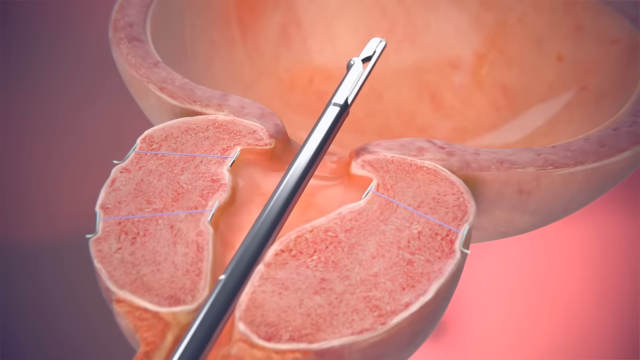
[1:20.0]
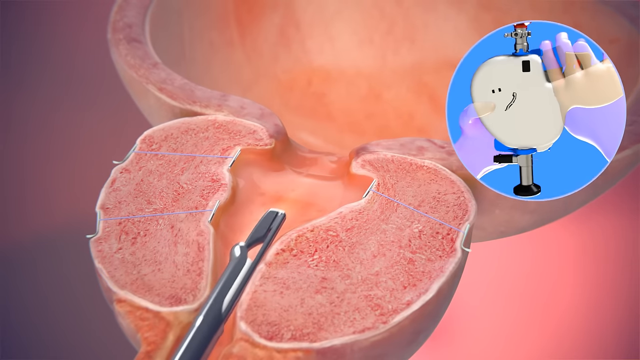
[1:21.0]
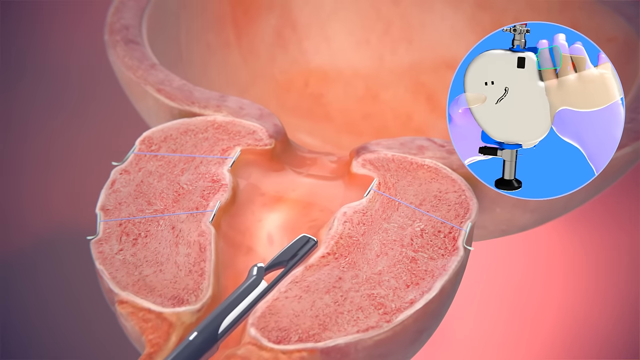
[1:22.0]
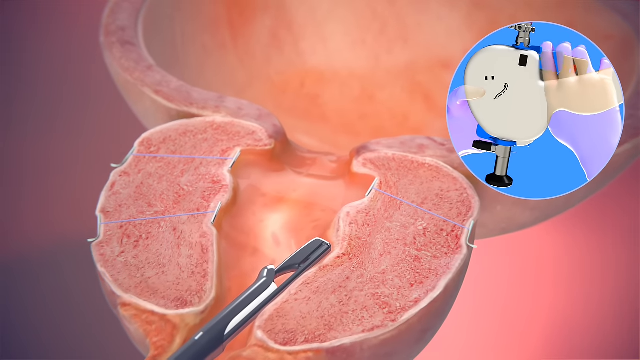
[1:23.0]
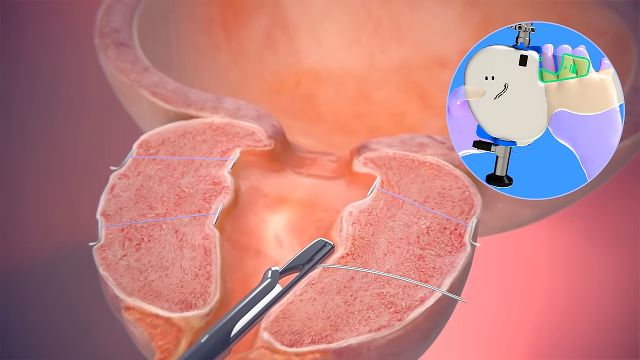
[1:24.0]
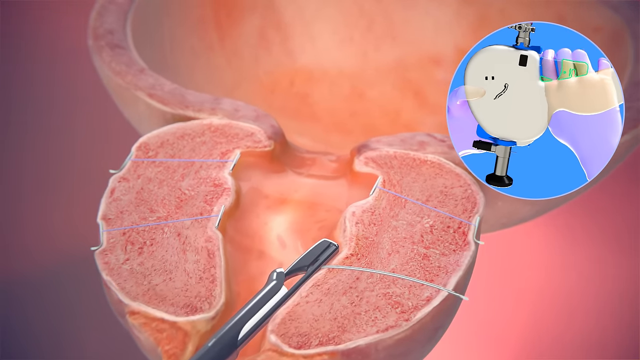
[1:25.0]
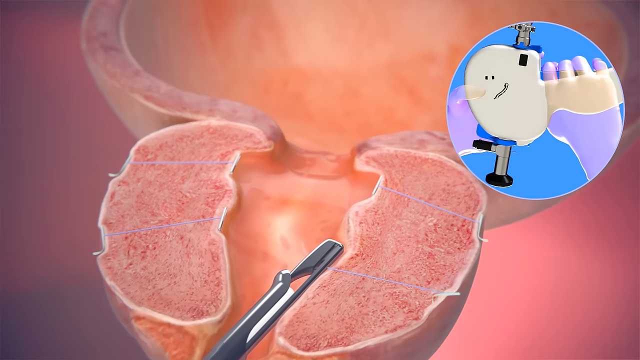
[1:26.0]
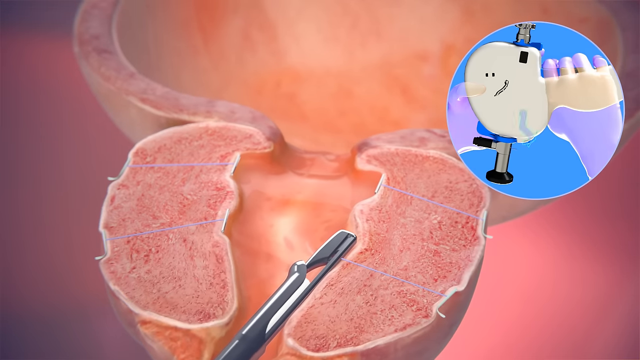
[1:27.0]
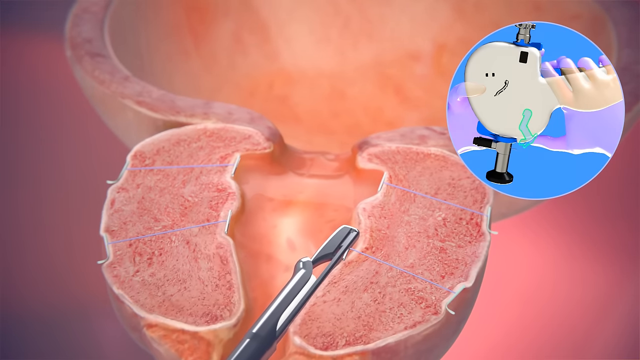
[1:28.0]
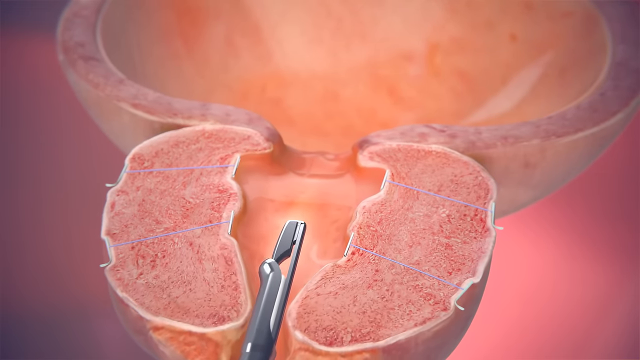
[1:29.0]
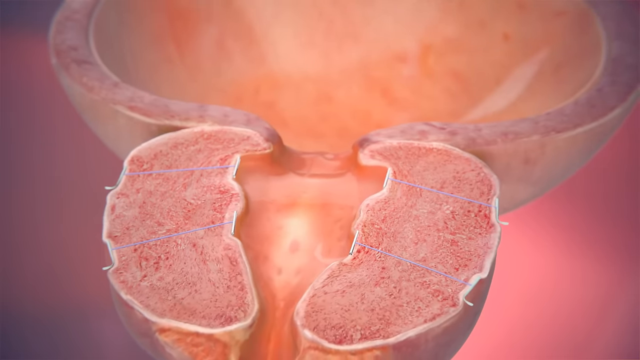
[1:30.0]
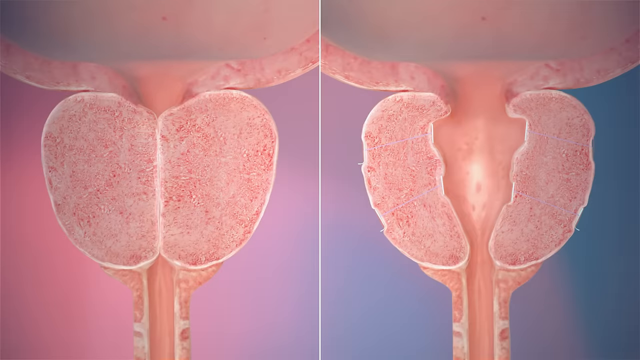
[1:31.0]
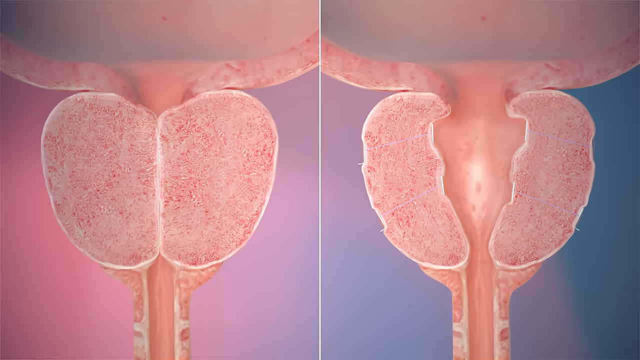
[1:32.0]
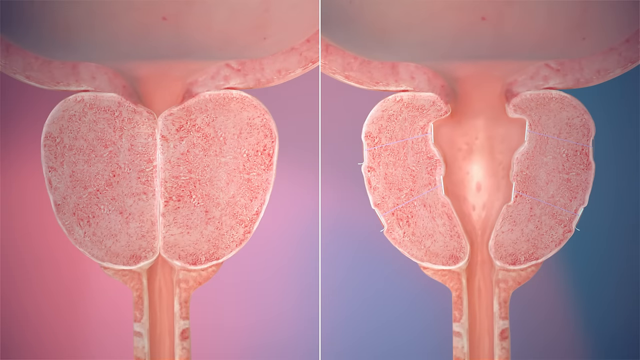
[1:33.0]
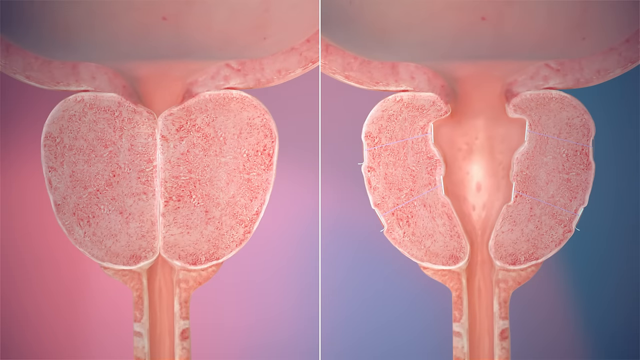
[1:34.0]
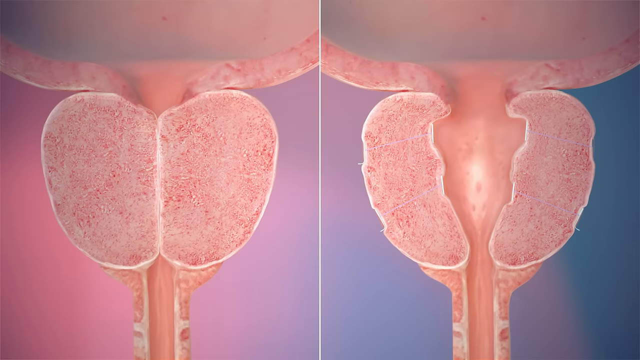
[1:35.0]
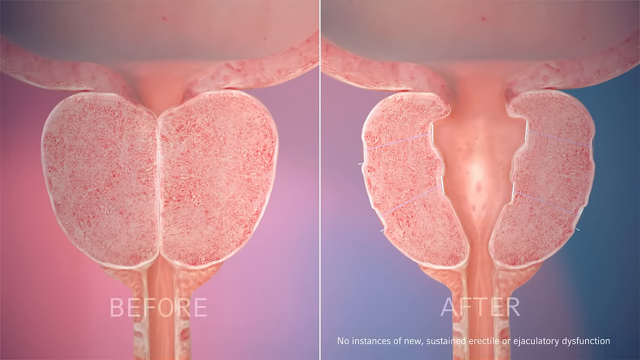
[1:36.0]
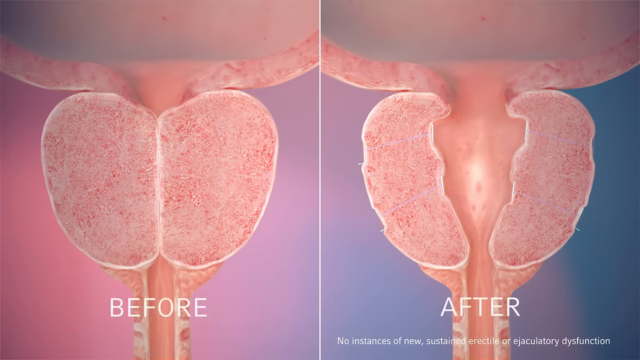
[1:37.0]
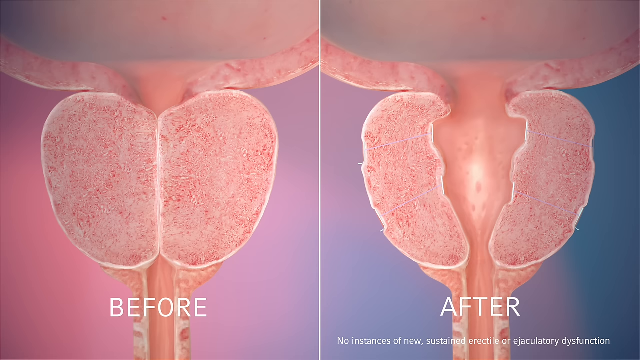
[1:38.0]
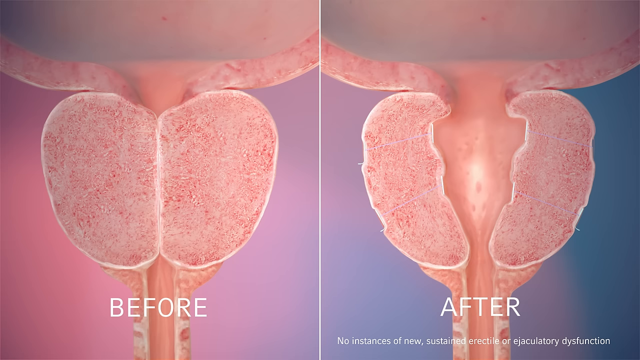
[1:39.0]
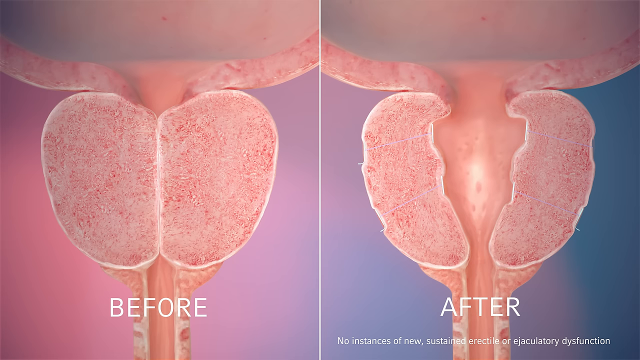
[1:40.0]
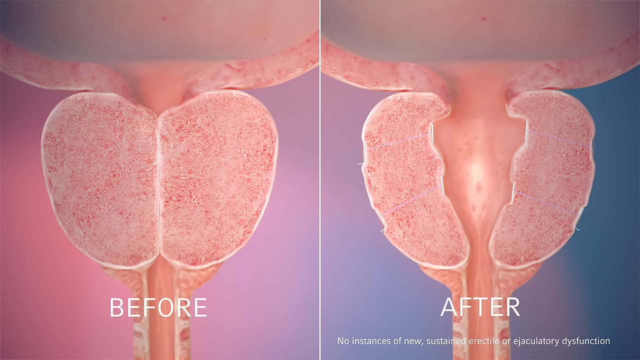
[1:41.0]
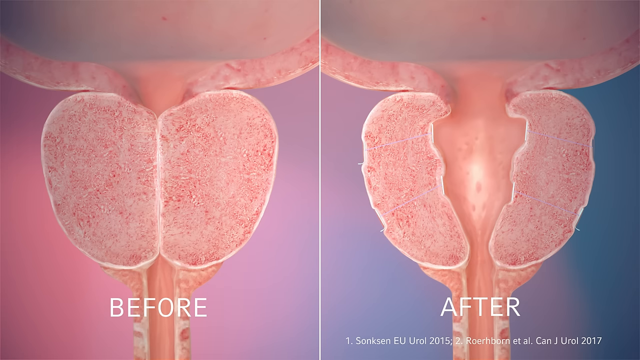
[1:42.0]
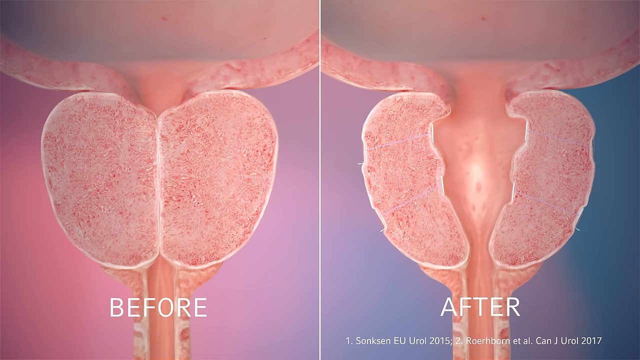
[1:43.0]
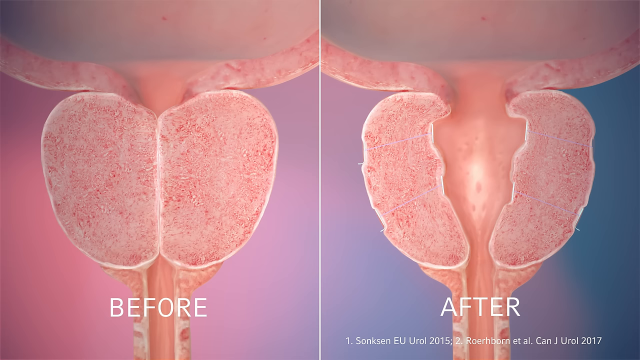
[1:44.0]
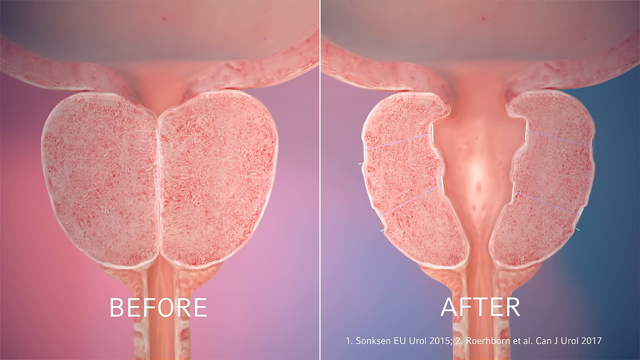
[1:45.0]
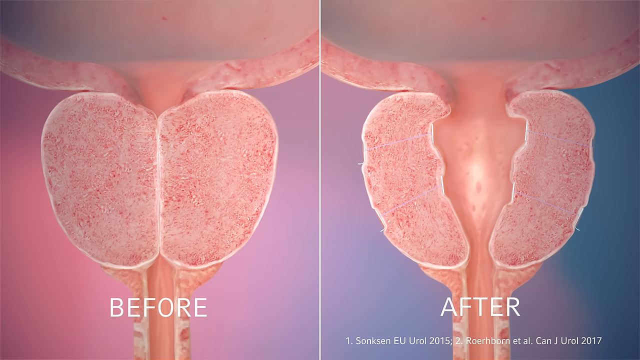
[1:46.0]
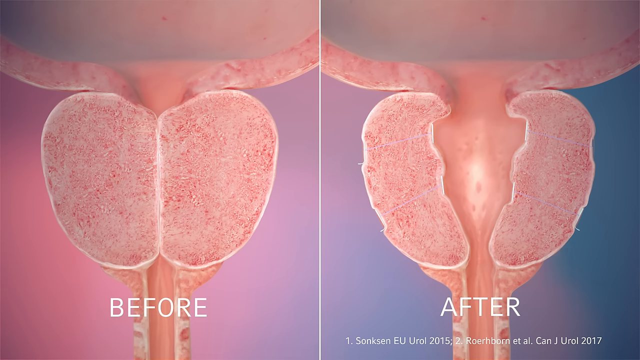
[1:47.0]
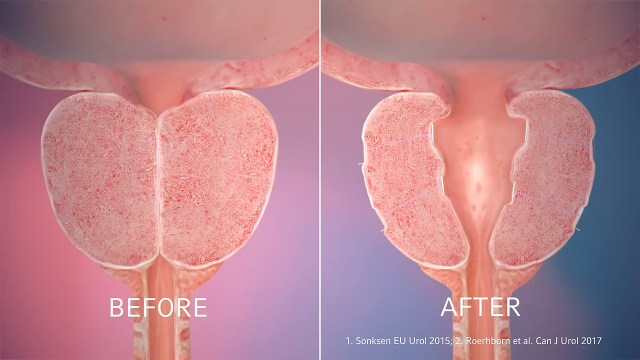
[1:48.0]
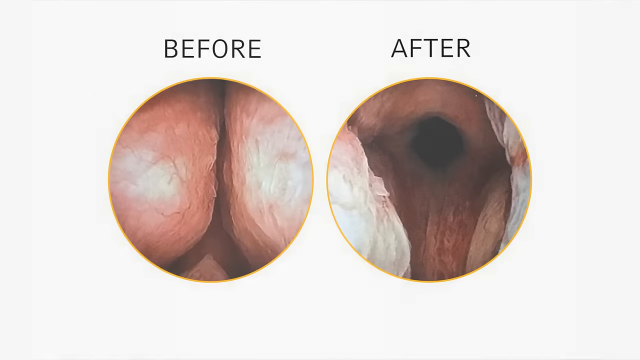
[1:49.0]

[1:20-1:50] An animated illustration shows a human male's prostate gland attached to the bladder, with a medical device performing a procedure and the inside of the bladder and prostate visible. The device, inserted into the bladder, is withdrawn and pulled backwards to the entrance of the prostate. A circular pop-up on the screen shows a pair of gloved hands operating the device. The device pushes the opening of the prostate to the right, further enlarging it. The camera pans slowly, rotating the view anti-clockwise. Faint, pale blue arrows signify that the device is pushing the opening to the right side. The device is then withdrawn totally. Next, a side-by-side comparison appears: the image on the left, labelled before, shows the prostate totally swollen and closing the urethra, while the image on the right, labelled after, shows the prostate after the procedure, with the passageway between the bladder and the urethra opened up and no longer blocked. The screen then transitions to what looks like a real-life view of a prostate with the before and after side by side, in circular frames.